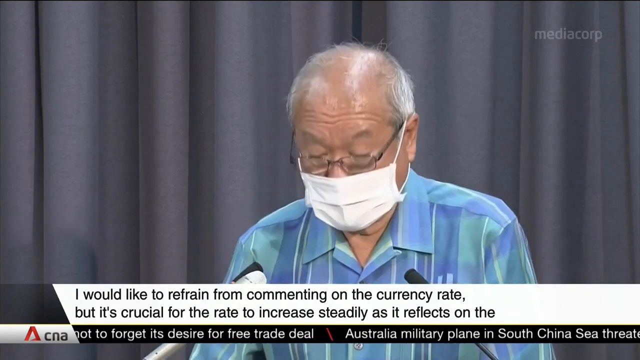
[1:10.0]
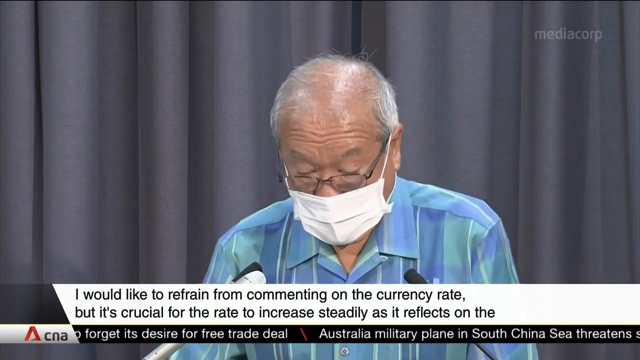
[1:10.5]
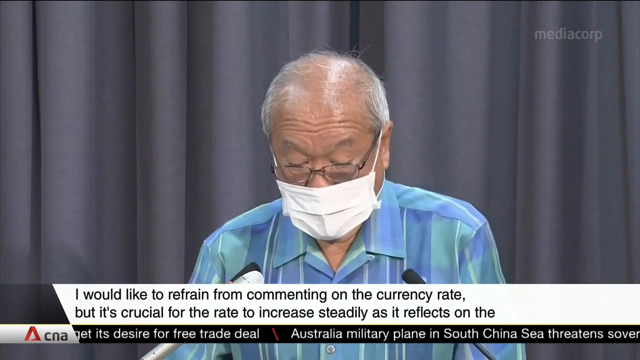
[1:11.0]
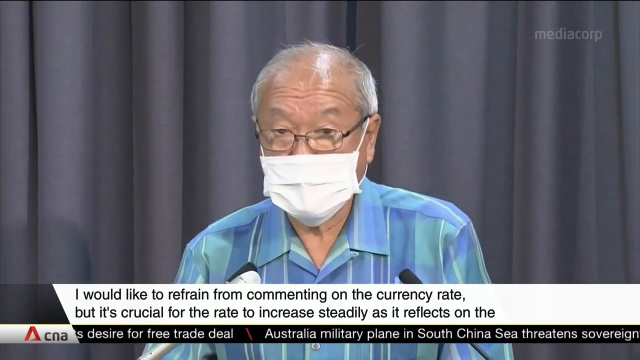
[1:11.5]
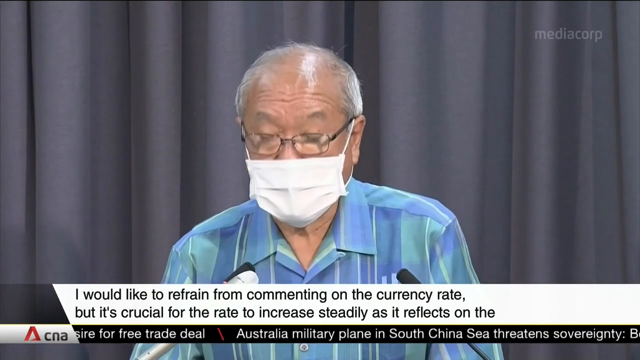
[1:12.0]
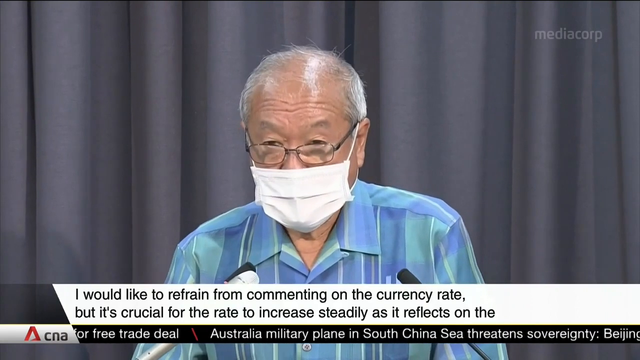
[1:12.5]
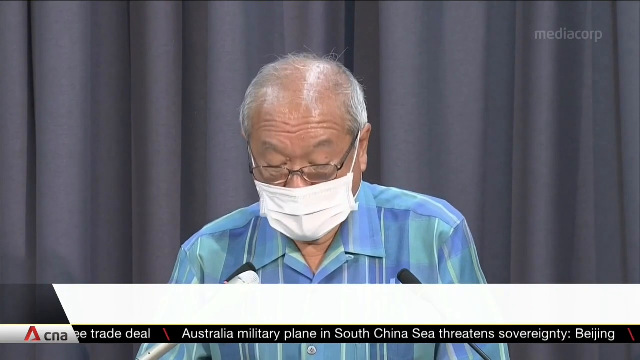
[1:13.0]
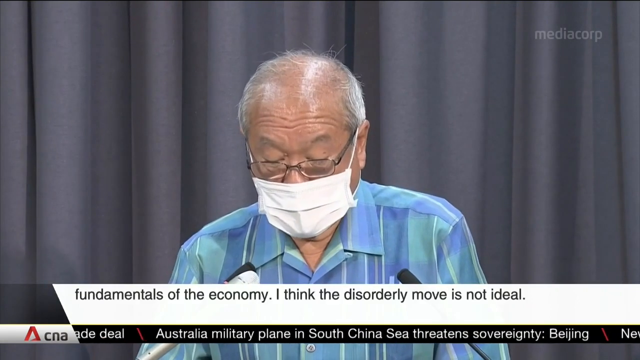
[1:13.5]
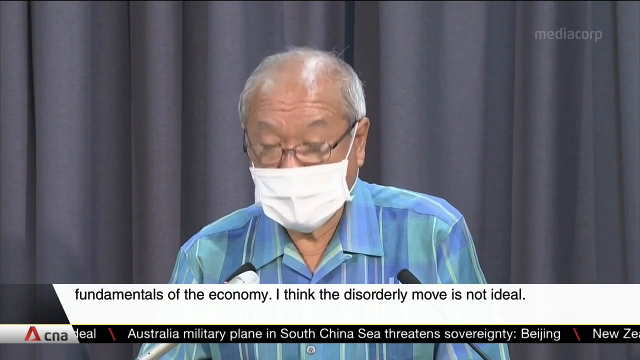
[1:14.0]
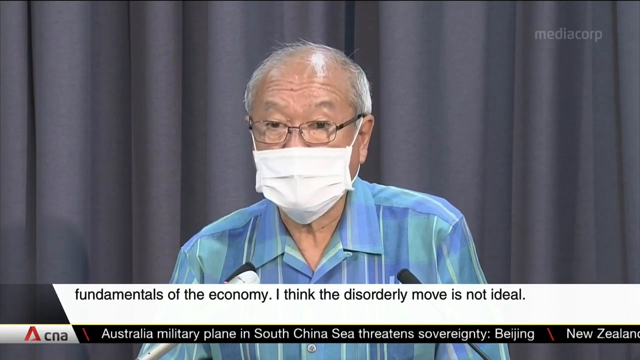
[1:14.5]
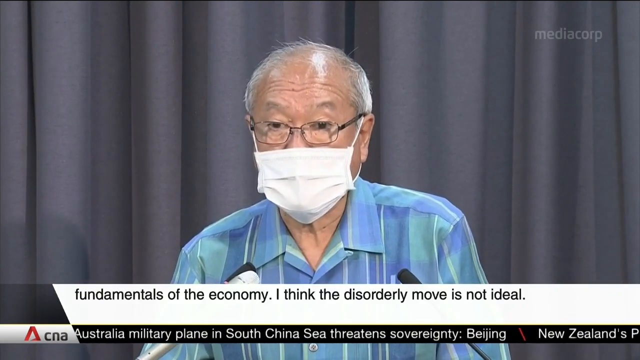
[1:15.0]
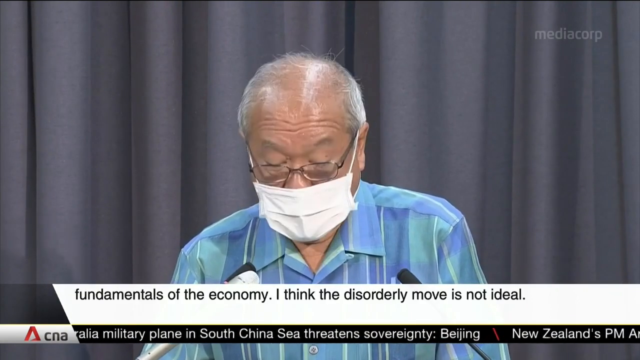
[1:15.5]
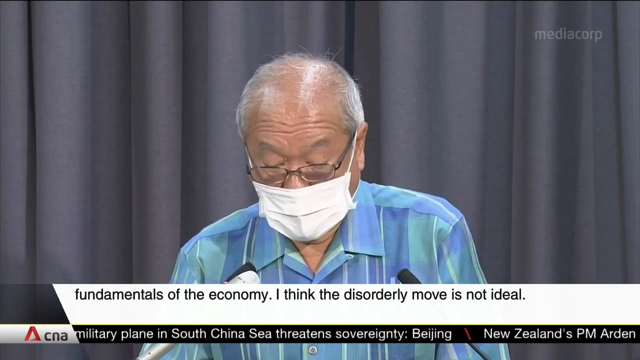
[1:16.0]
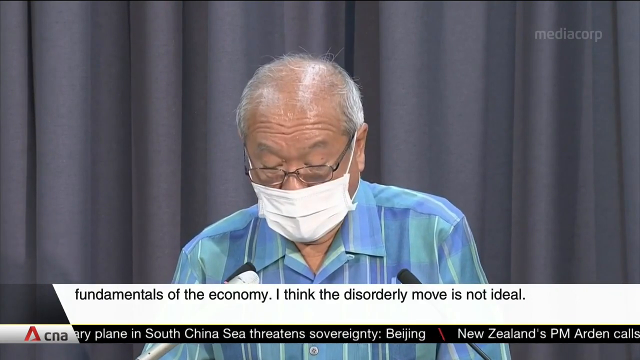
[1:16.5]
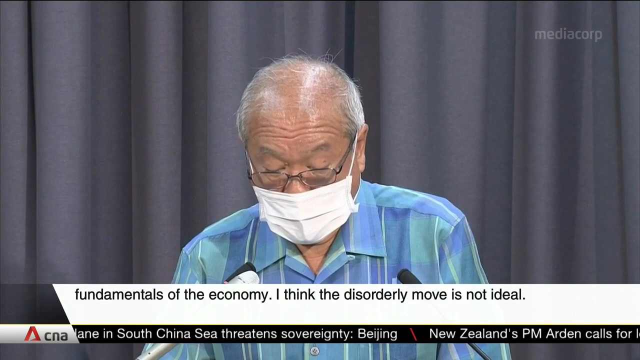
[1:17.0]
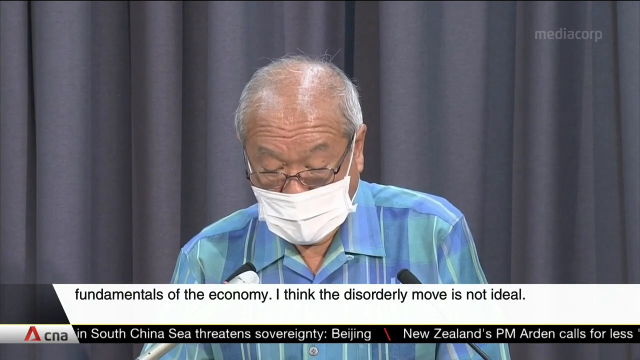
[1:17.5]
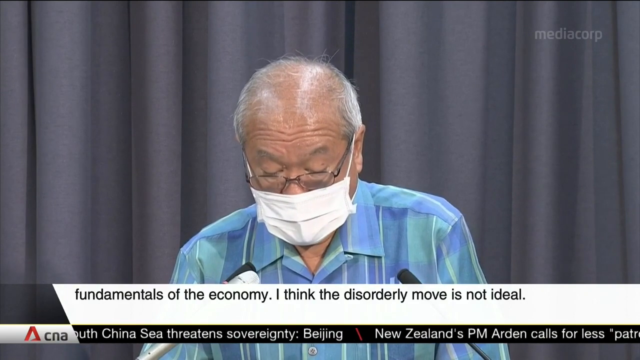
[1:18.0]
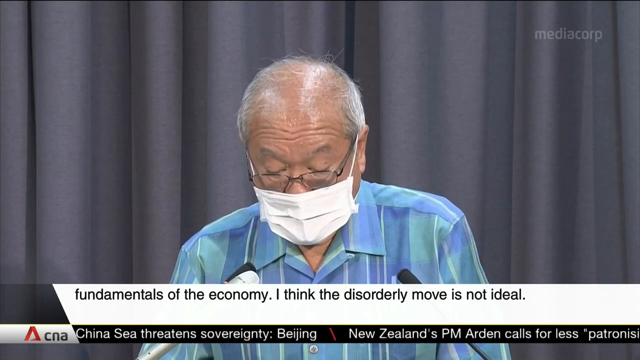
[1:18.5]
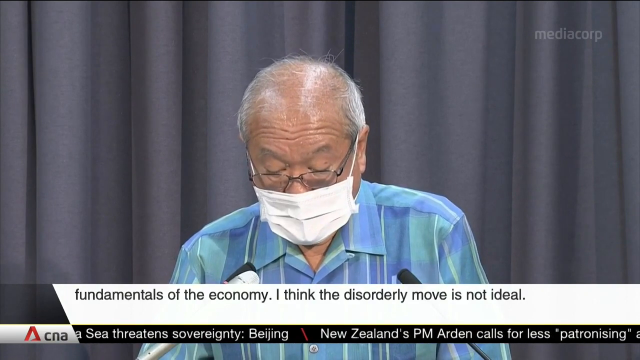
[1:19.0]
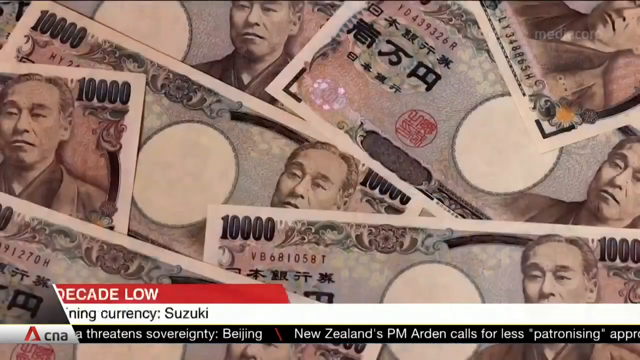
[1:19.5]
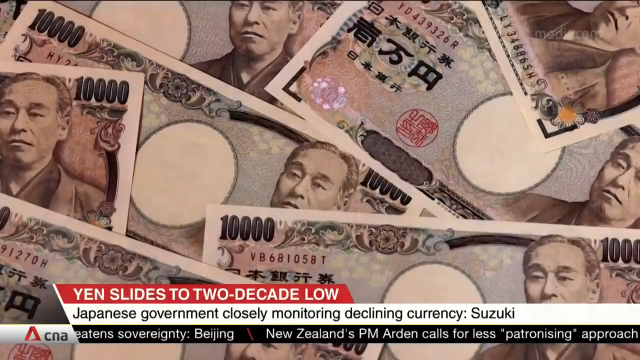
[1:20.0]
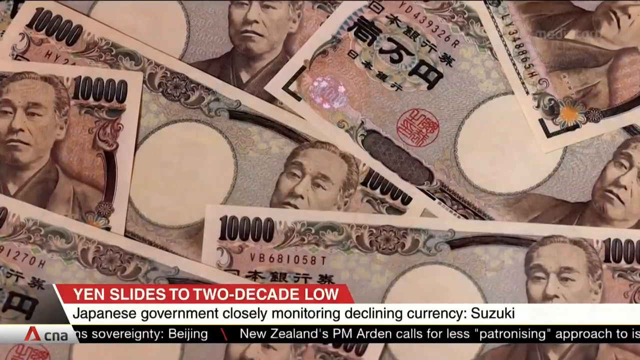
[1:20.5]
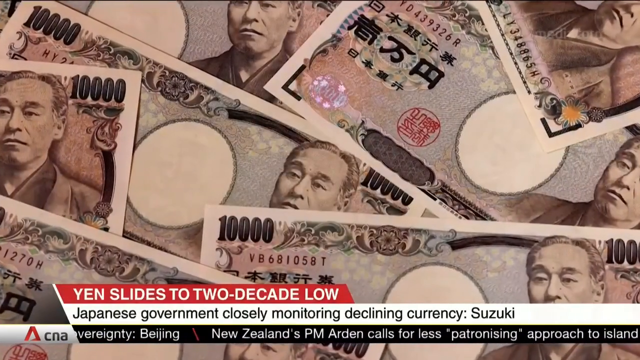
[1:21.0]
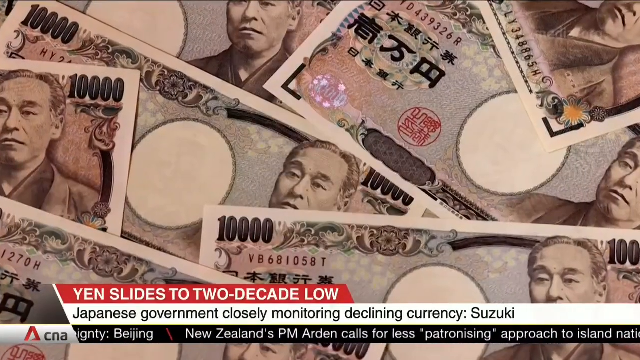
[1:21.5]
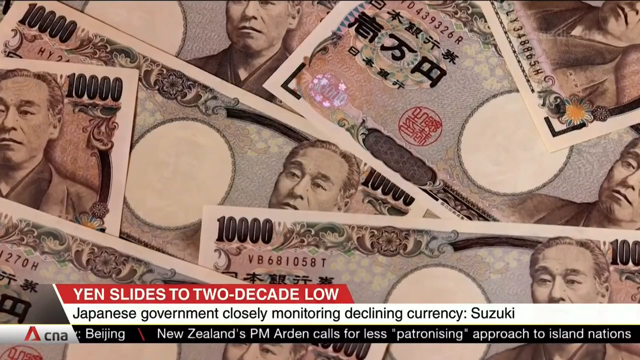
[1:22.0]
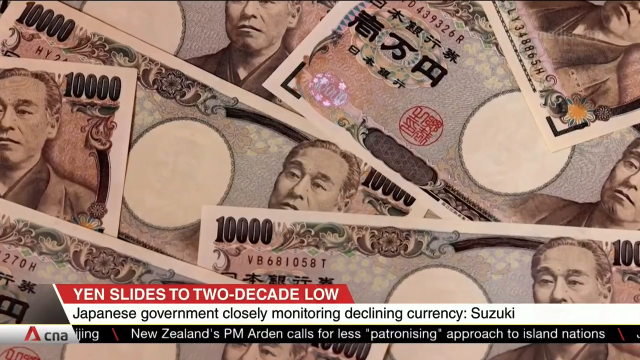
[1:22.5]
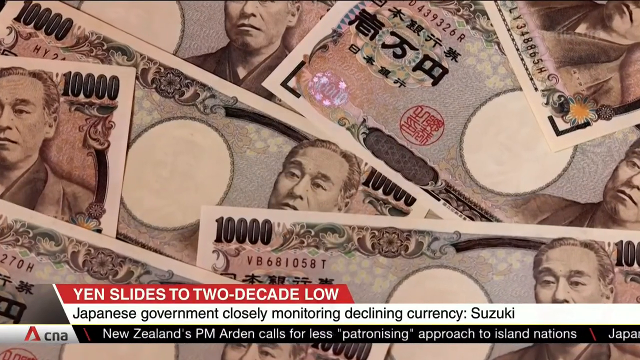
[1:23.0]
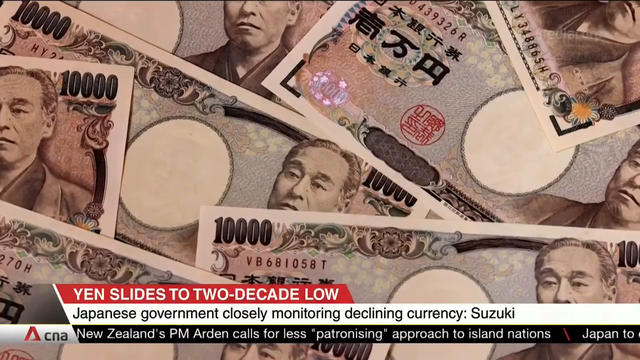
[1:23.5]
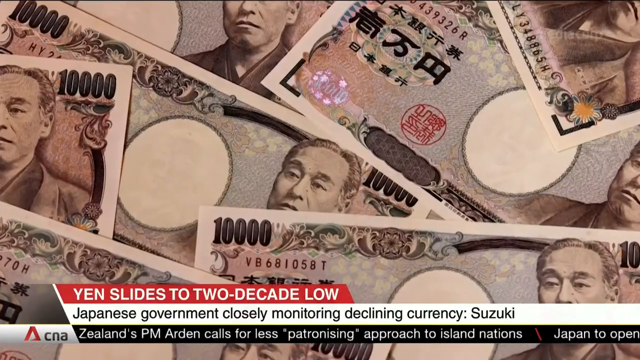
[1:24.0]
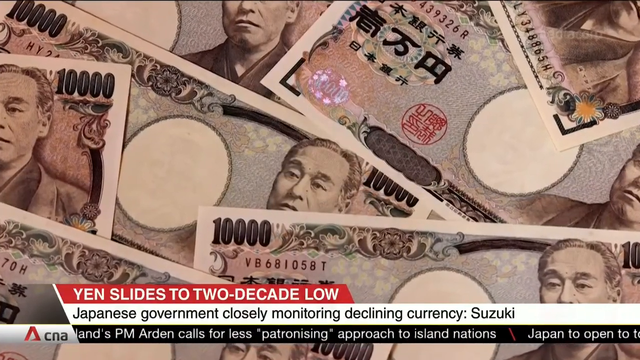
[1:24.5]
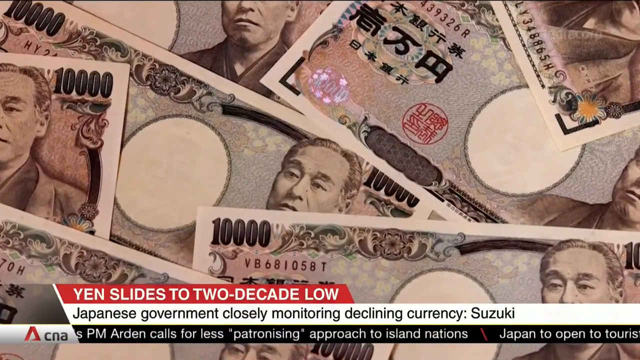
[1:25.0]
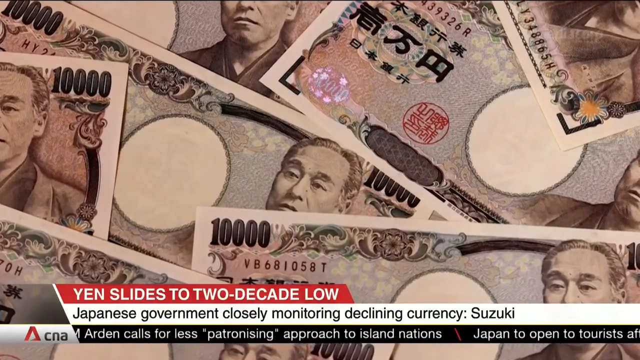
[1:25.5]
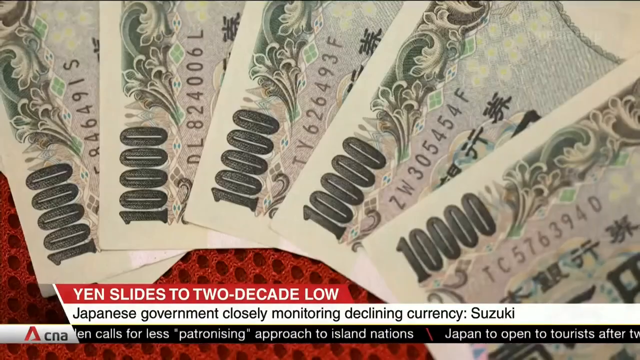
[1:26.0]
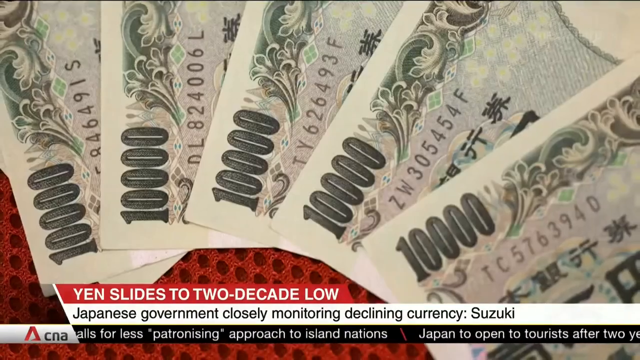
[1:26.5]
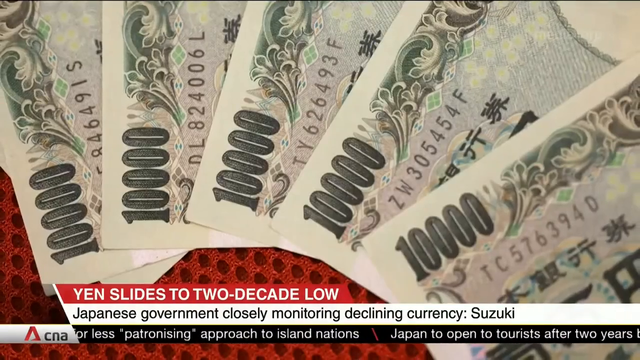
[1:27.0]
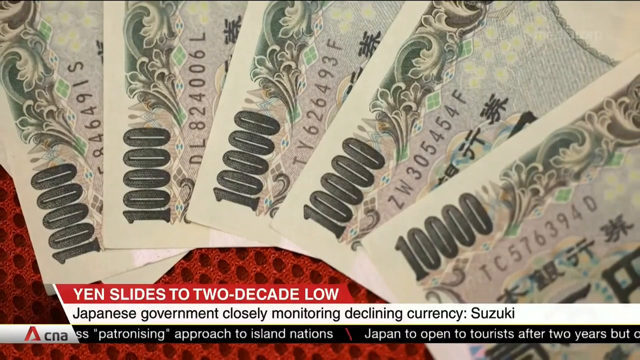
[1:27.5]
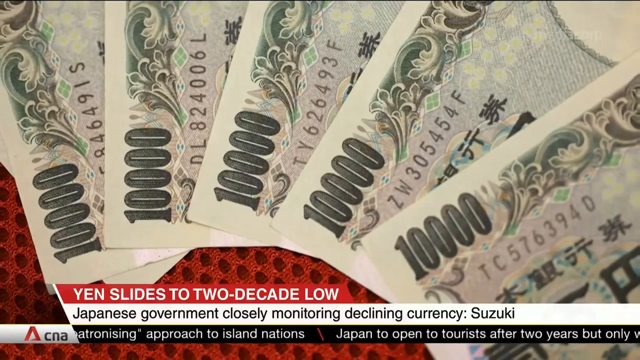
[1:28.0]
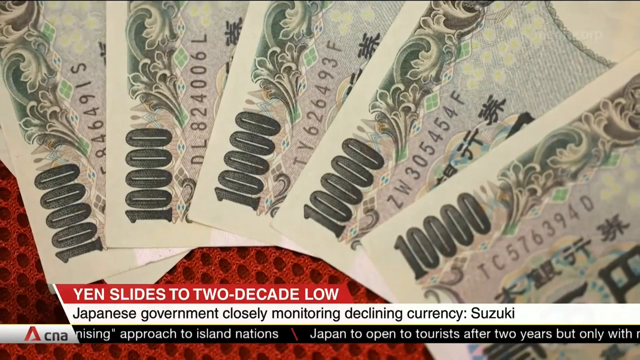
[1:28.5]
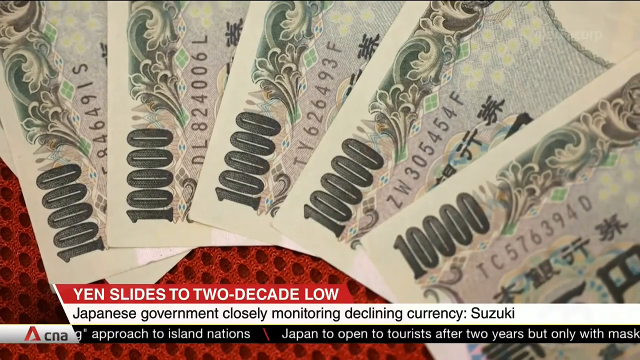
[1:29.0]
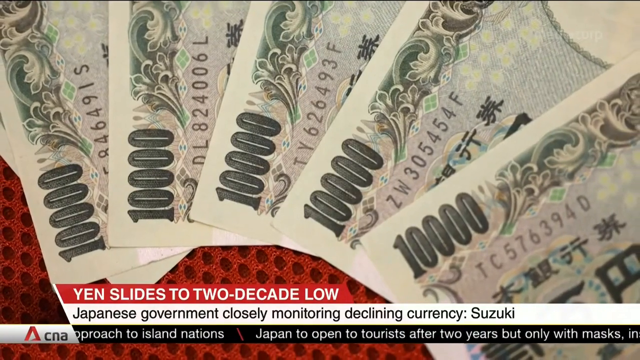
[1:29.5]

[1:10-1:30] The finance minister is still shown, and he says "I think that this orderly move is not ideal." Headlines read "New Zealand's PM Arden calls for less patronizing approach to island nations," "Japanese government closely monitoring decline in currency: Suzuki," and "yen slides to two decade low." Images of what appear to be 10,000 yen bills follow, apparently six of them; on five, the 10,000 is visible in the upper left-hand corner of the bill, the number in dark gray rather than full black. The top bill shows the code "TC576394D" with what are apparently Japanese characters under it. The other bills show serial numbers "ZW305454F," "TY626493F," and "DL8240067."